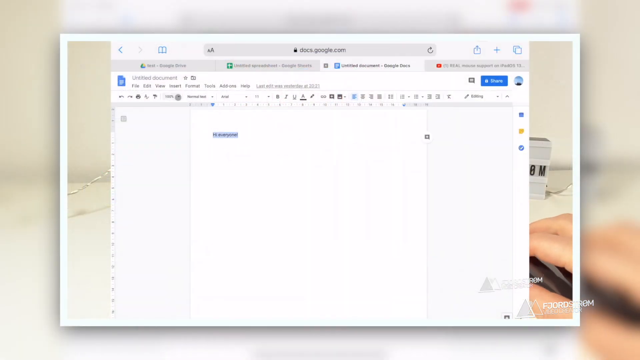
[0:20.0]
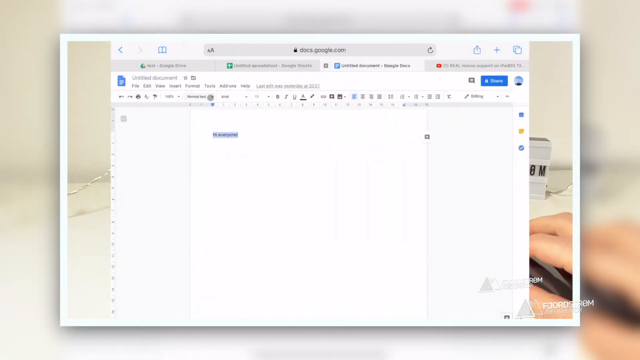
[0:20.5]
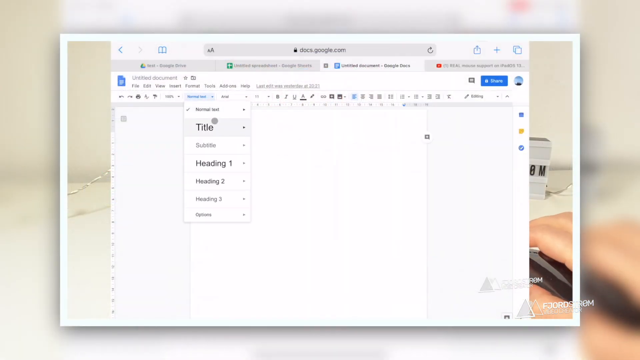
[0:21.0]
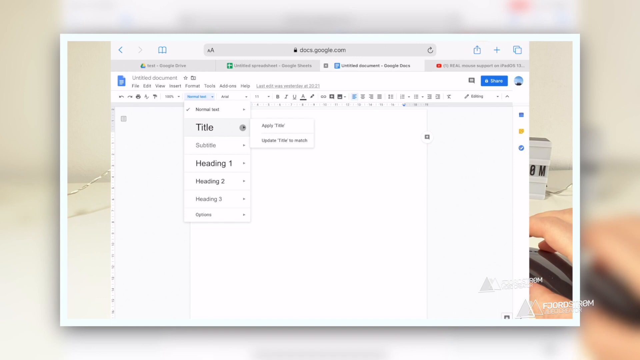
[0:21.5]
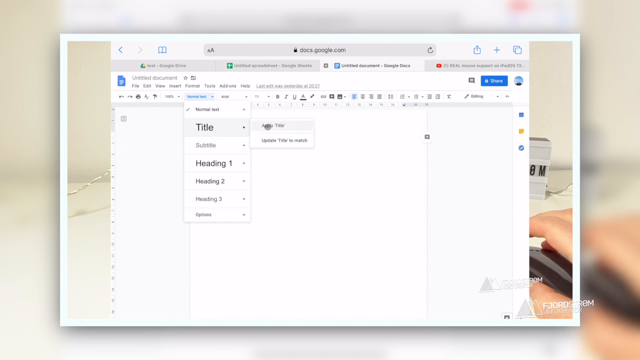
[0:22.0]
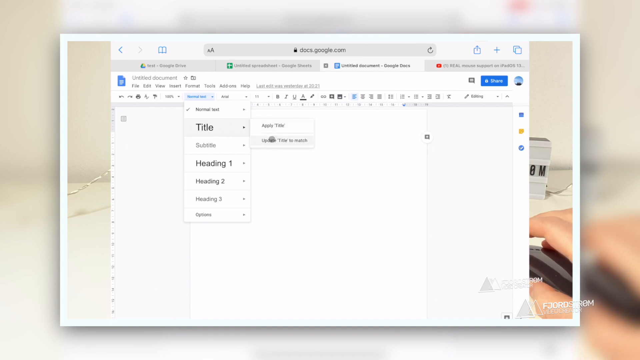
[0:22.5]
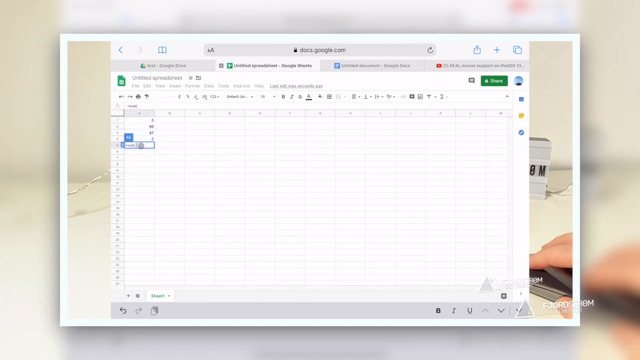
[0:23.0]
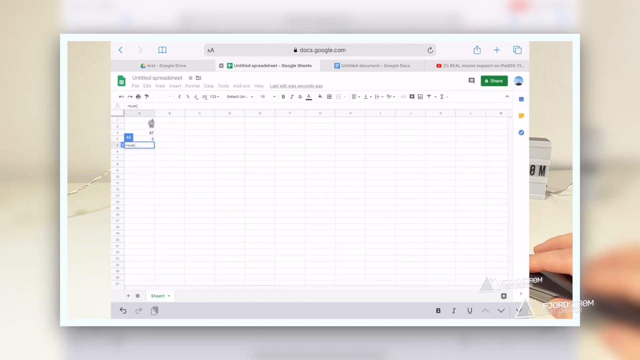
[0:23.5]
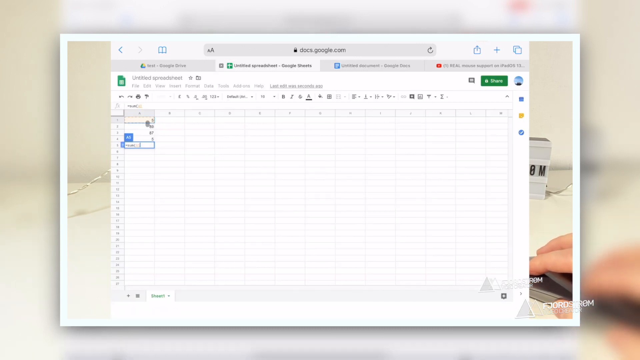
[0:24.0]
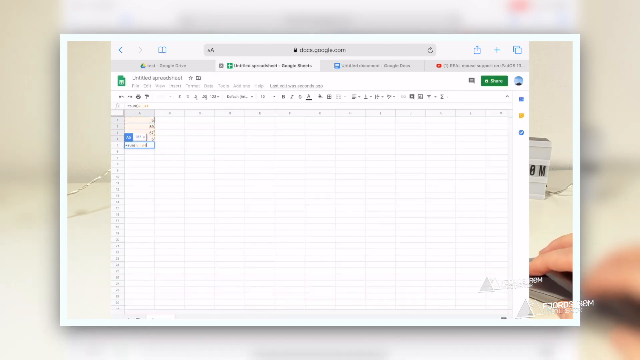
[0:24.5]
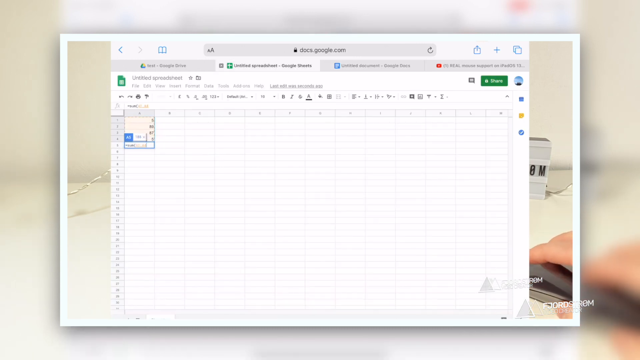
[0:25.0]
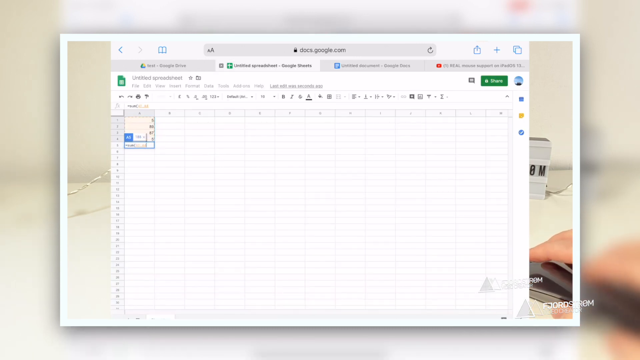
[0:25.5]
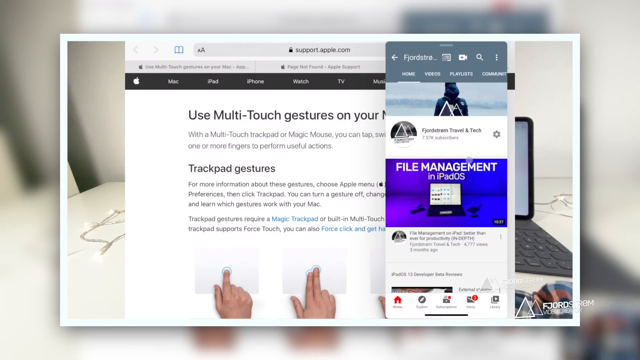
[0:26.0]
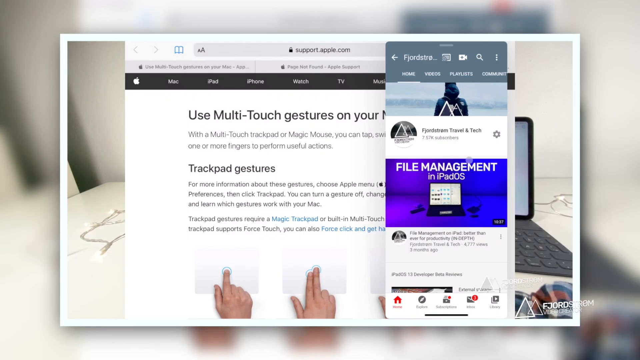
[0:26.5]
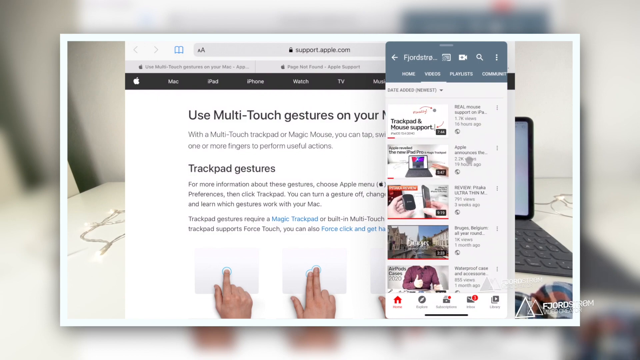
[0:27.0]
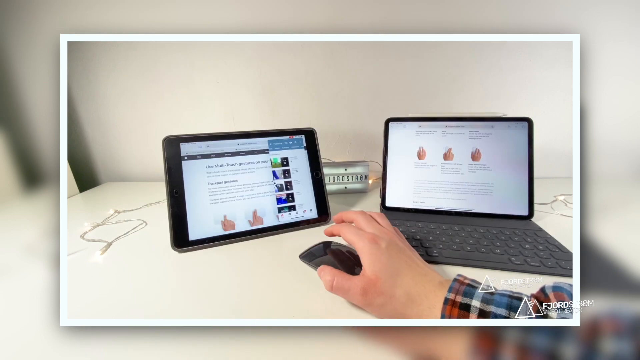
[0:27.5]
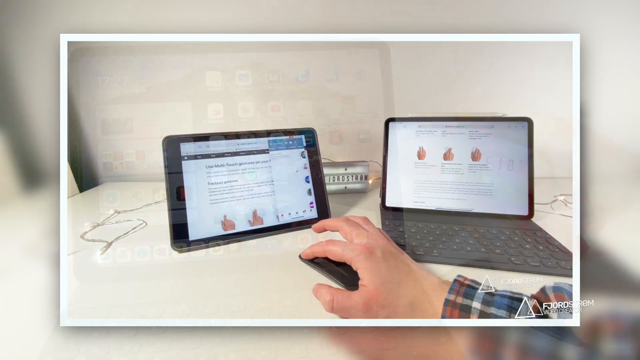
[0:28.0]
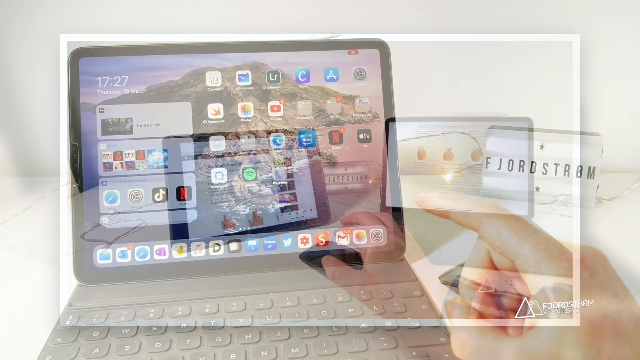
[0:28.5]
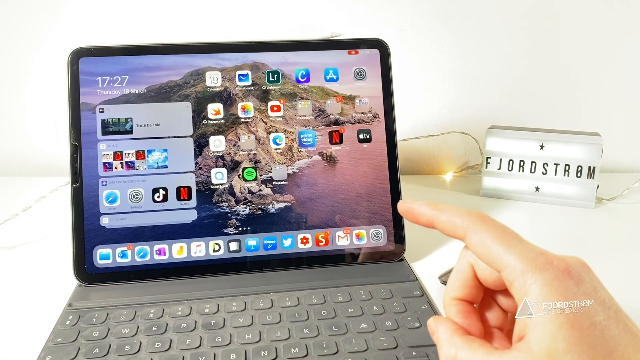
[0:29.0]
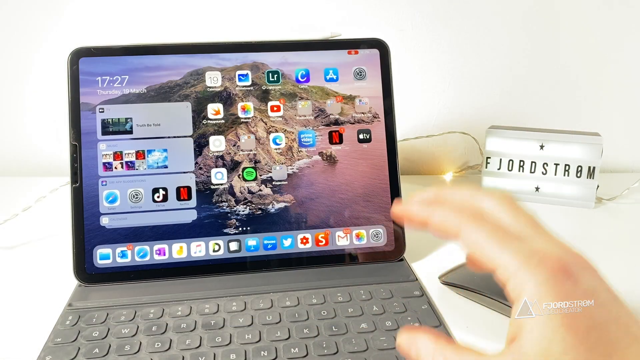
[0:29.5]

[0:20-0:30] A browser window shows Google Docs, with other tabs open, such as YouTube. The doc contains the text "hi everyone," which has a blue color over it as if highlighted. The person moves the mouse in the toolbar, apparently looking for options, clicks a drop-down box, and hovers over a section that says "title," then moves the mouse around a little where it says "apply title" and "update" before it goes off the screen. Next the person is in Google Sheets, dragging across a bunch of boxes and then placing the mouse in one of them. The screen transitions to support.apple.com, which shows information on multi-touch gestures and trackpad gestures. Another small box, which looks like YouTube, reads "file management and iPad OS" on the home page, and he swipes through that YouTube widget. The video then shows him with his mouse, focusing on another tablet right next to a computer, and transitions to a closer view of the tablet as he points and moves his hand a bit.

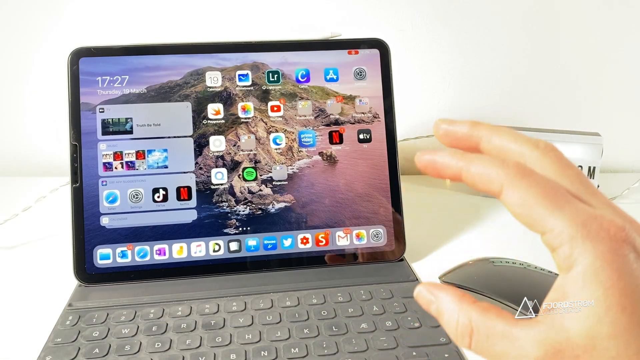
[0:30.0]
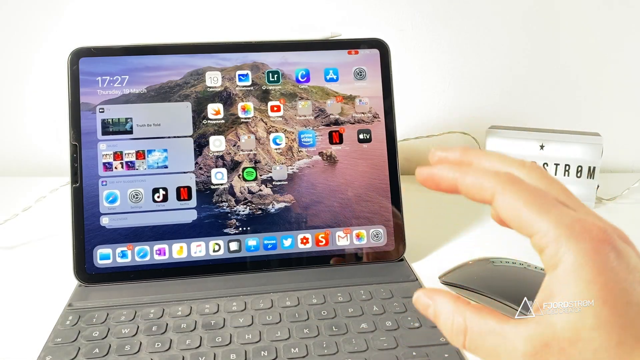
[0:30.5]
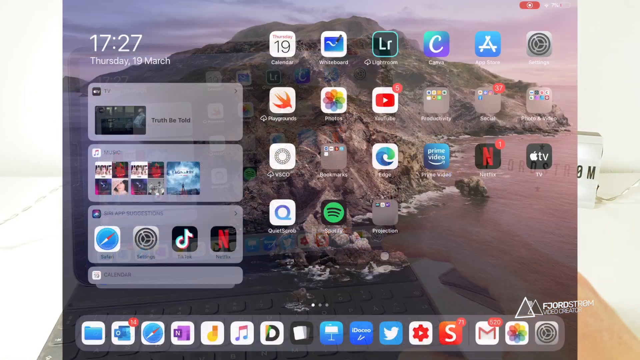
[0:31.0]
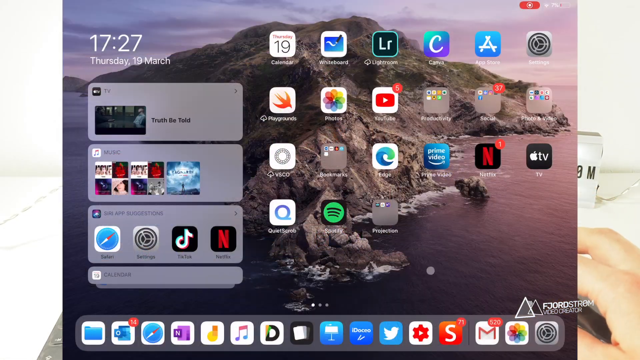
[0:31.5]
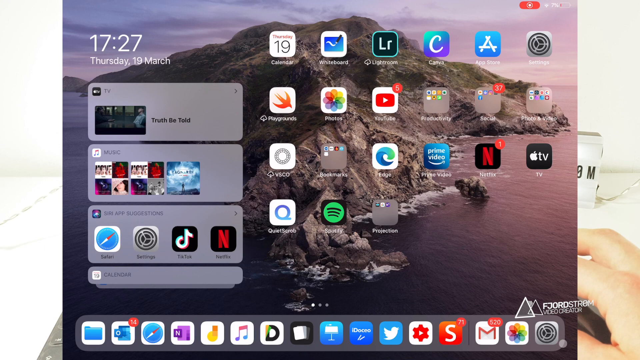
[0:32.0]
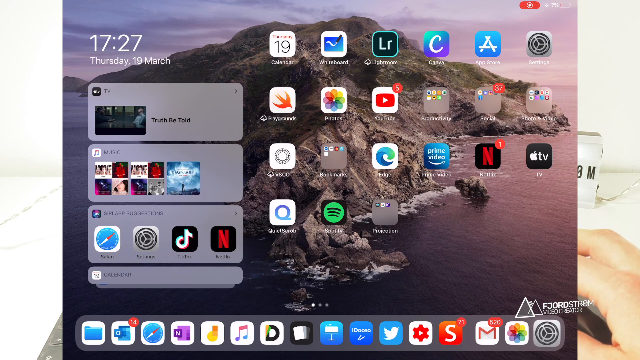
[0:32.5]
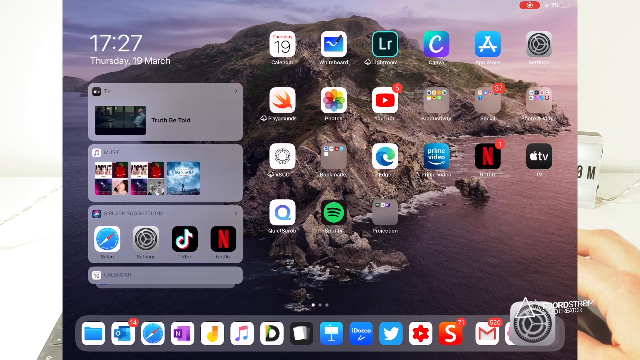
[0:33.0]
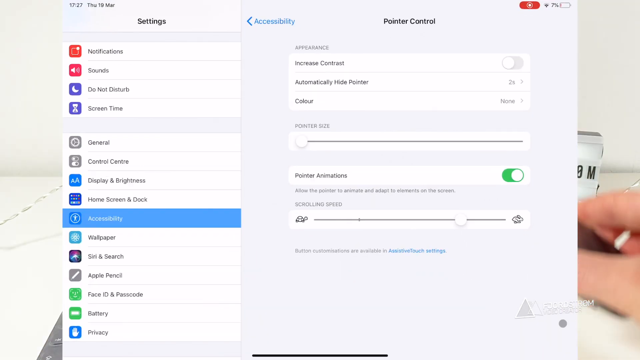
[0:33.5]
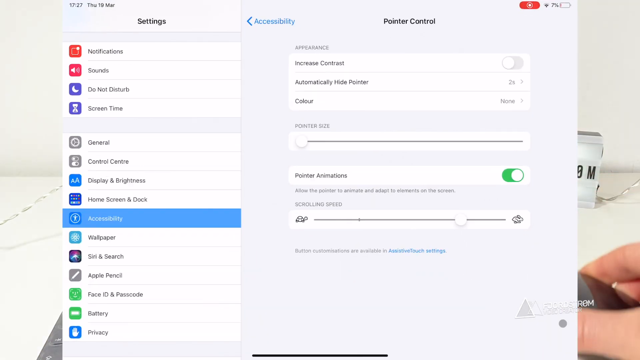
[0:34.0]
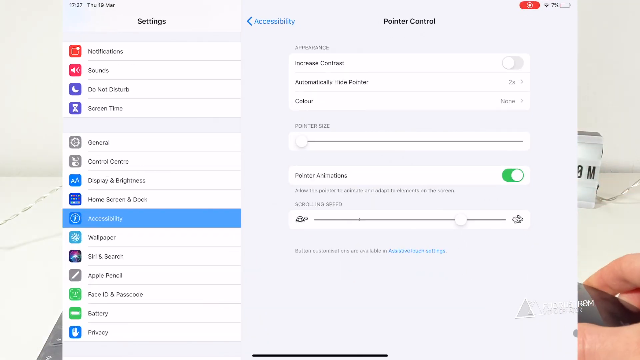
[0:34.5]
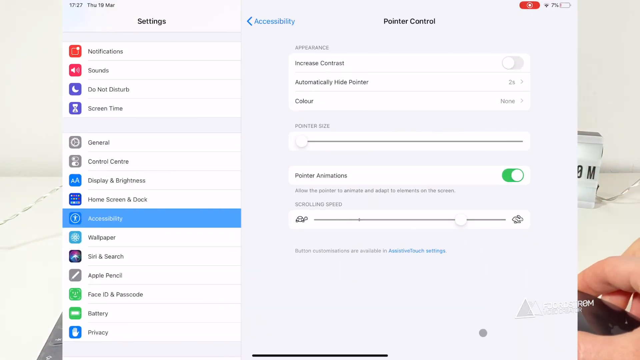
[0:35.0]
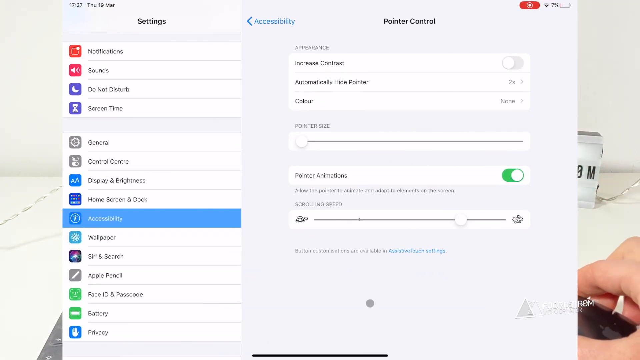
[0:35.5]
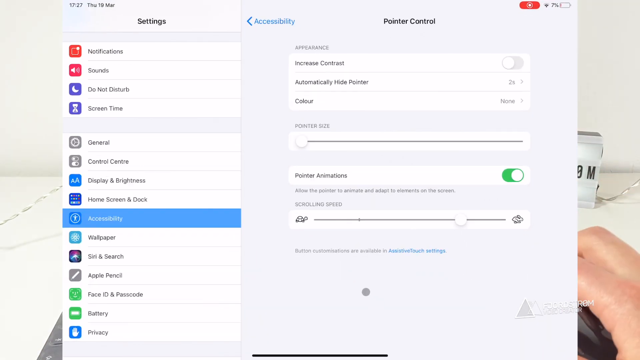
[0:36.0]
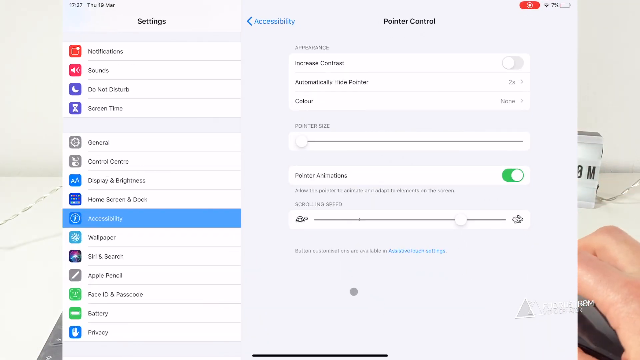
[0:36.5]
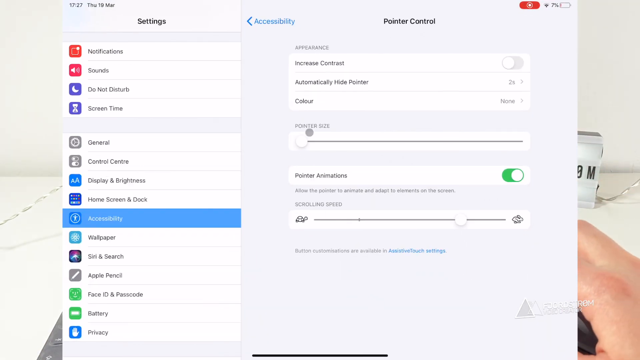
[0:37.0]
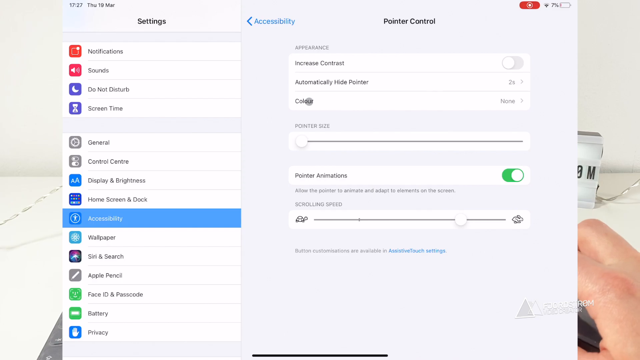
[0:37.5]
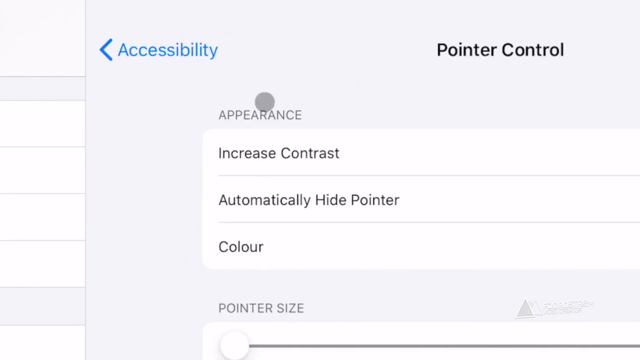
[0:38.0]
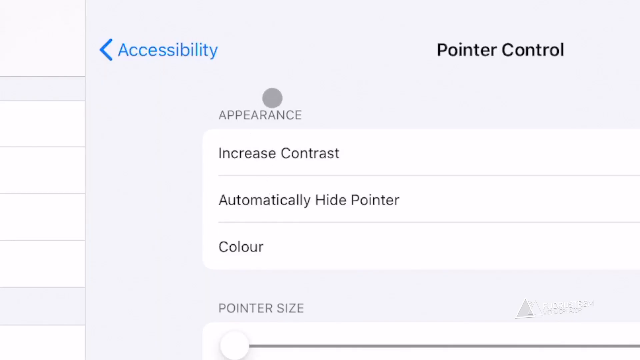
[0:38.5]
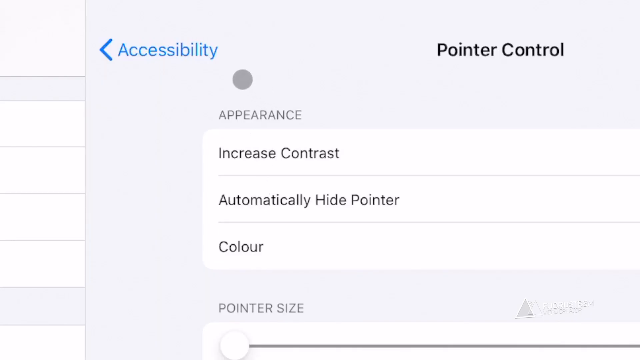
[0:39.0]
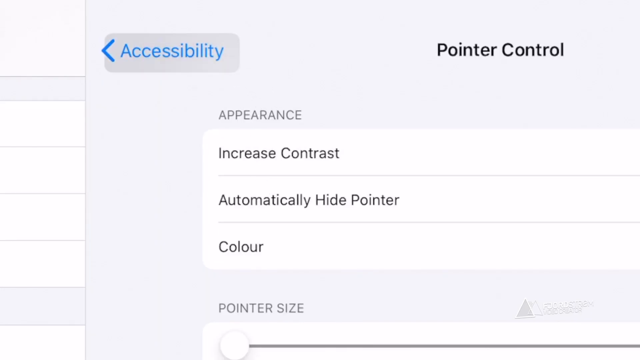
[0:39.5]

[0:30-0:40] Somebody has a computer tablet in front of them, its screen showing many icons such as TikTok, Netflix, Apple TV, Spotify, Lightroom, Photos, Canva, Settings and Email. He moves his hand a bit as if explaining something. The main home screen is shown, and he opens Settings. Options include Notifications, Sounds, Do Not Disturb, Screen Time, General, Control Center, Display and Brightness, Home Screen, Wallpaper, Siri and Search, Apple Pencils, Face ID and Passcode, Battery and Privacy. He is on the pointer control settings, with appearance options such as Increase Contrast, Automatically Hide Pointer, Color, Pointer Size, Pointer Animations and Scrolling Speed. He moves his mouse slightly in a circle, then goes over to the Color section. The camera seems to zoom in on this area, and he moves his mouse over to the Accessibility tab.